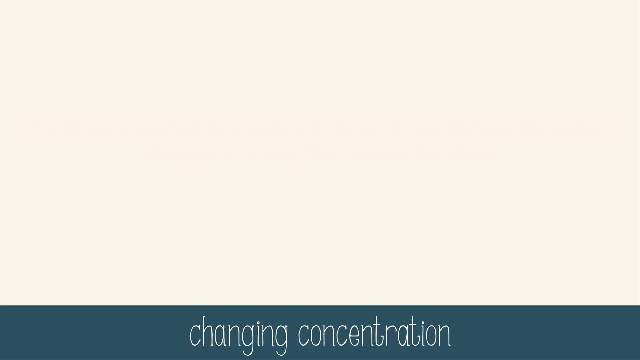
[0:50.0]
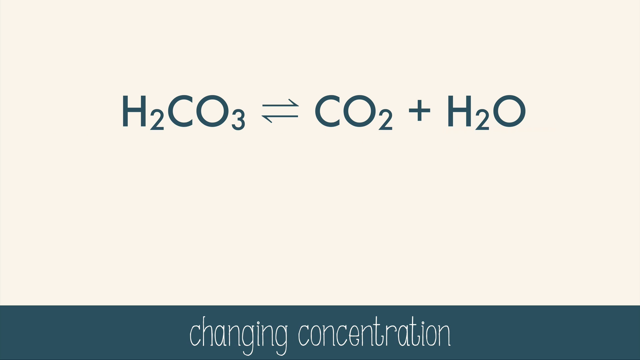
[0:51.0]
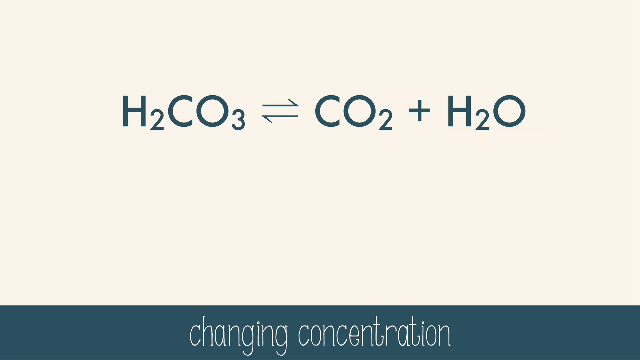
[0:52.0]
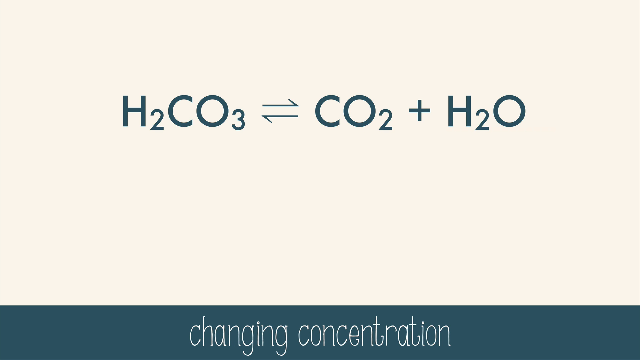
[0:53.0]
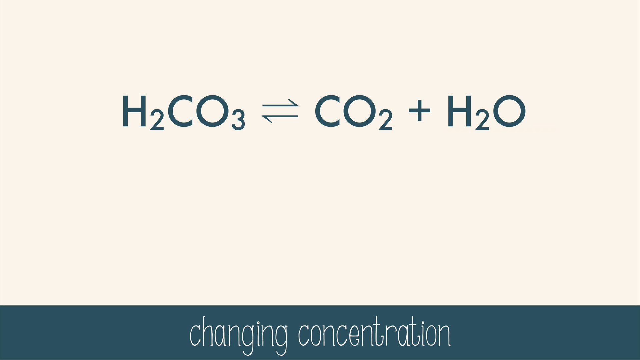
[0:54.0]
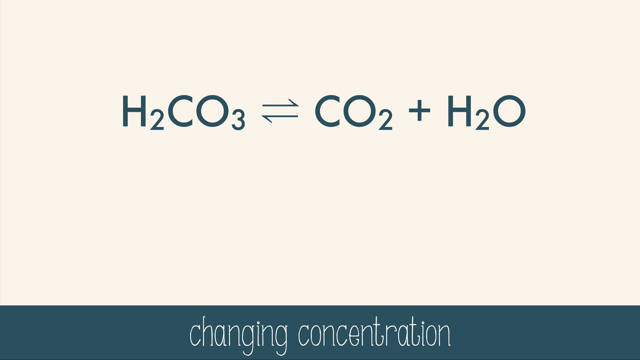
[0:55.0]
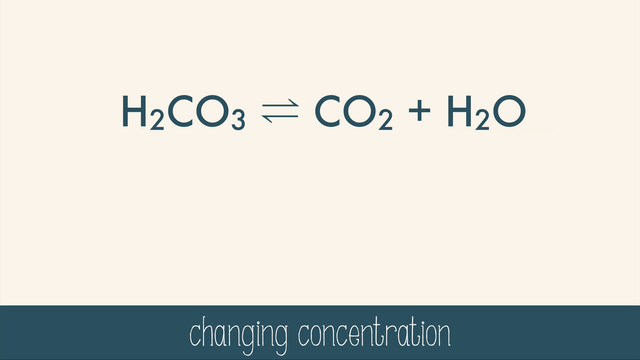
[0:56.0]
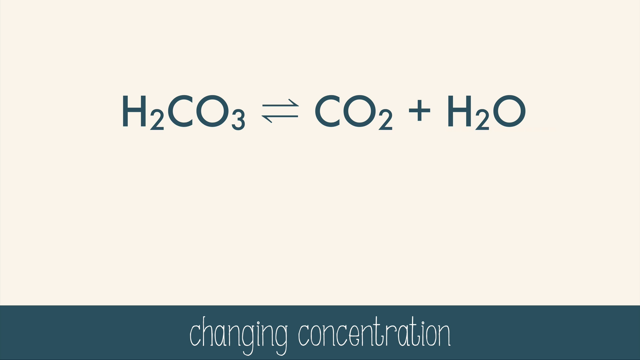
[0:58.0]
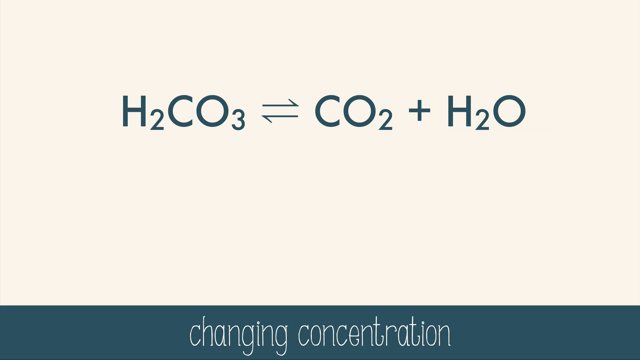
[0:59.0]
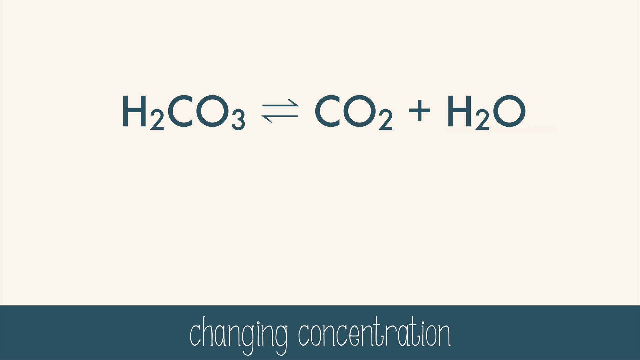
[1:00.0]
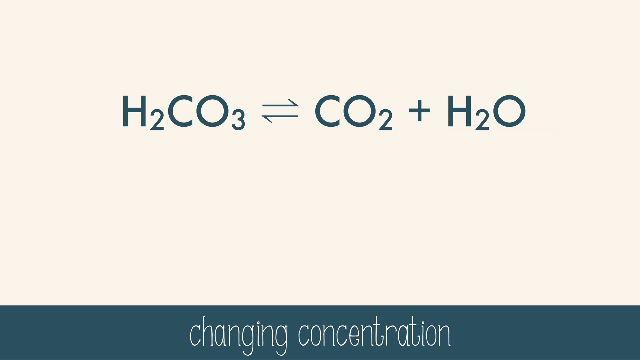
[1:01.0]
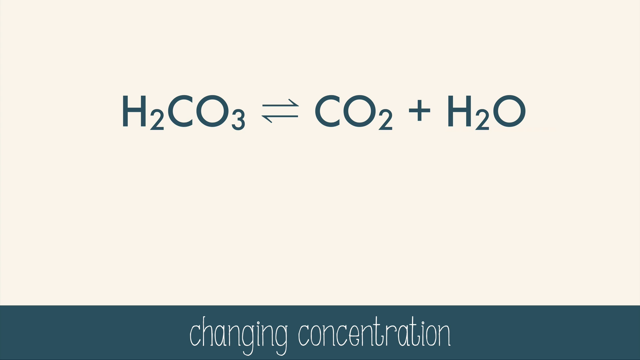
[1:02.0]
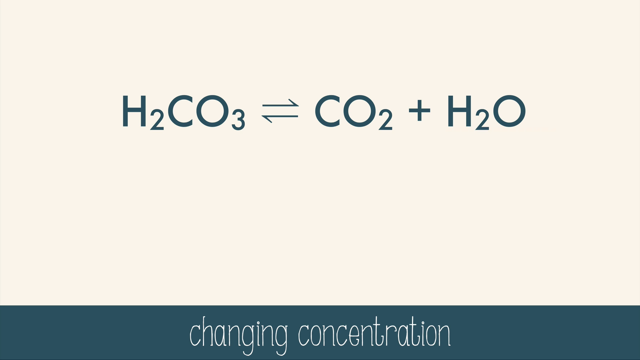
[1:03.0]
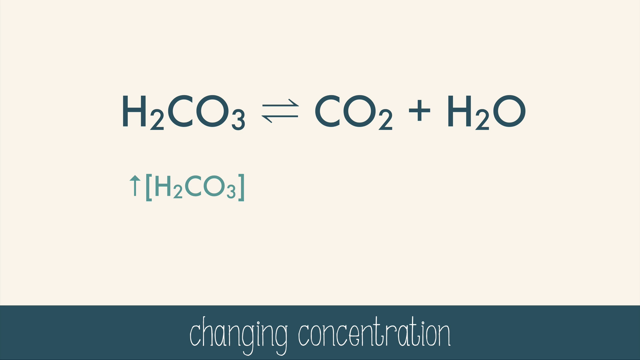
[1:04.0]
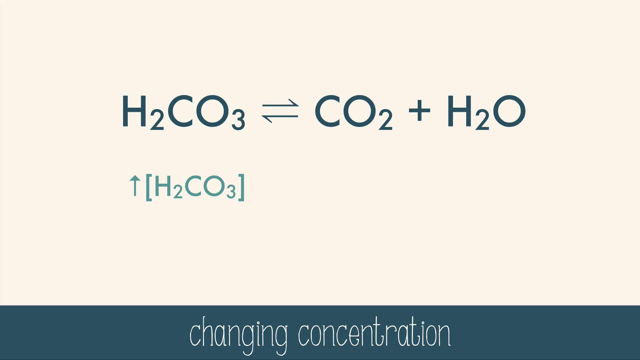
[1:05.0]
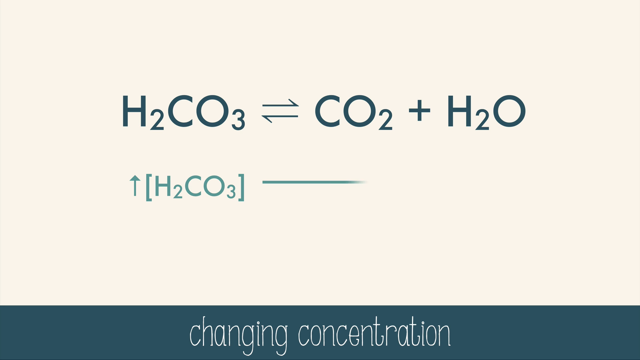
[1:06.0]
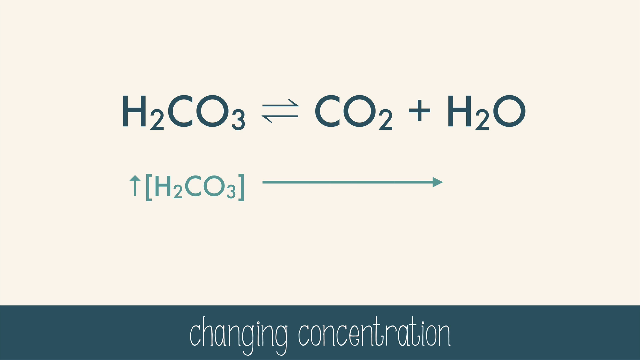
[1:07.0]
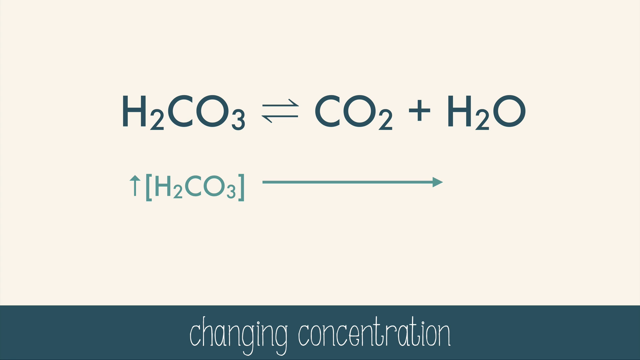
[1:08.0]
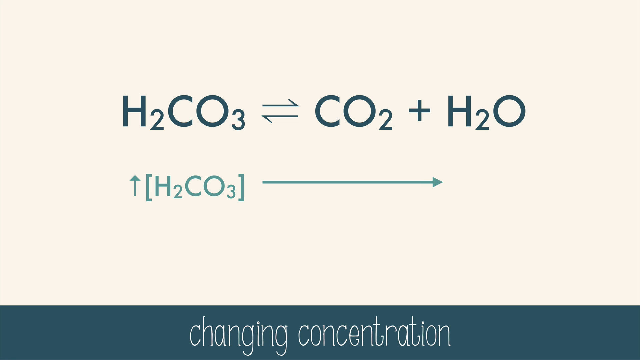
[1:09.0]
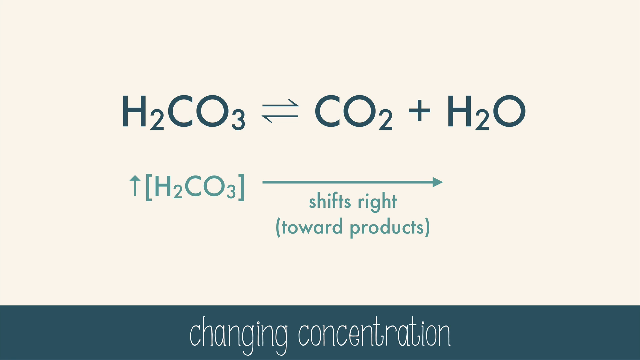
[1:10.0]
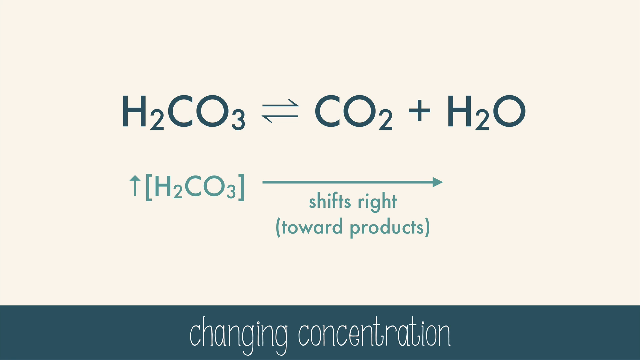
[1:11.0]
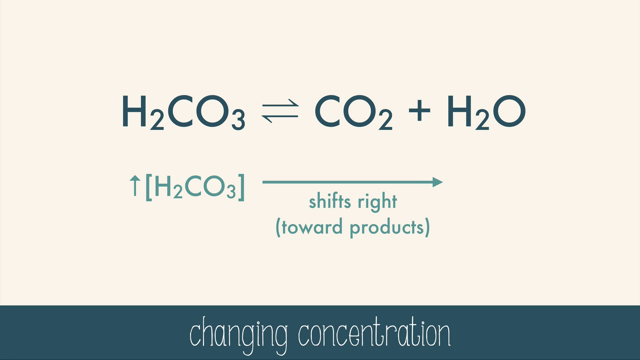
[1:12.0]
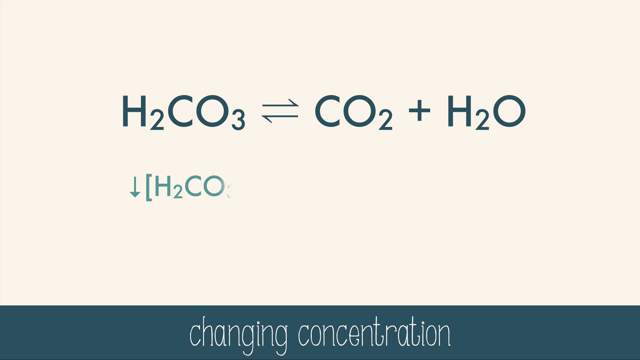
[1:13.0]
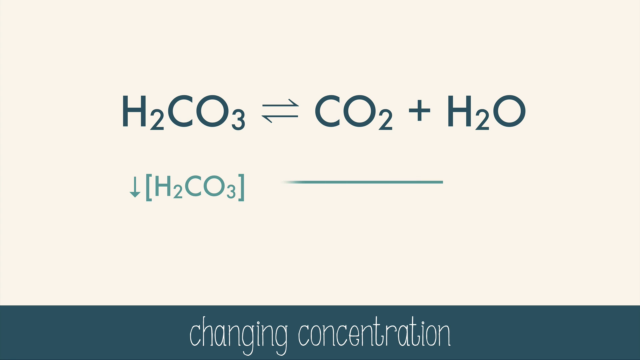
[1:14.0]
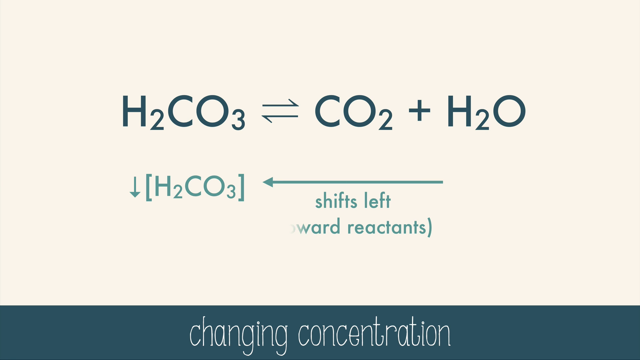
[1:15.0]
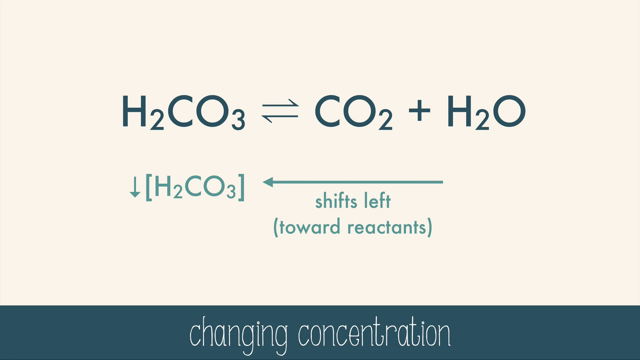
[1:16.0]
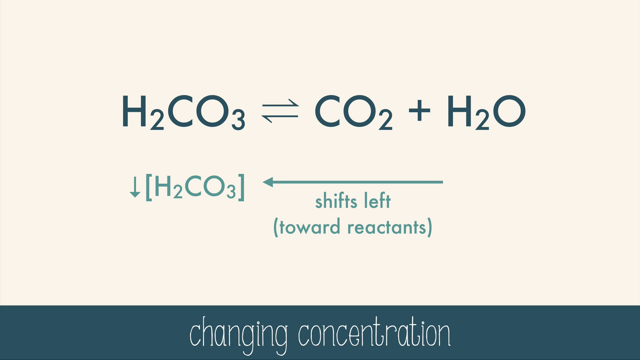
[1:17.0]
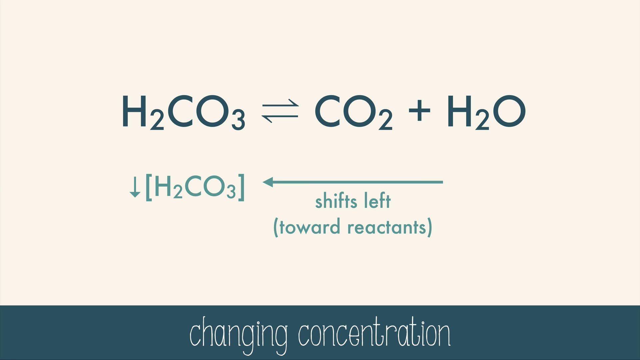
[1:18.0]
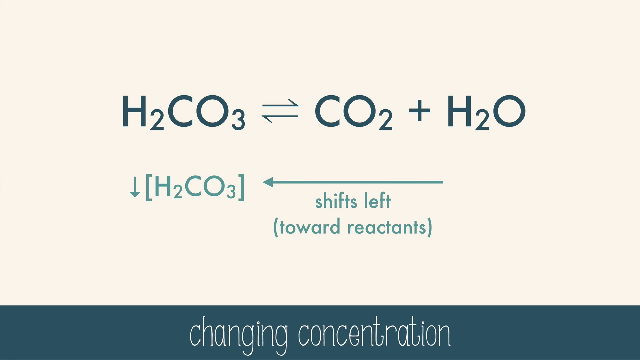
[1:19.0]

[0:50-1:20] On a tan background, the blue banner at the bottom reads "Le Chatelier's Principle" and then changes to "Change Concentration", in white text. An equation pops up on the tan background in blue text: H2CO3, then lines, then CO2 + H2O, and it stays on screen for several seconds. Then, in lighter blue text, an up arrow appears, followed by H2CO3 and an arrow pointing right, and text comes up that says "shifts right toward products". An arrow is then drawn pointing left, and under it the text says "shift left towards reactants". A line pointing down appears right by the H2O-CO3. The slide continues with various movements.